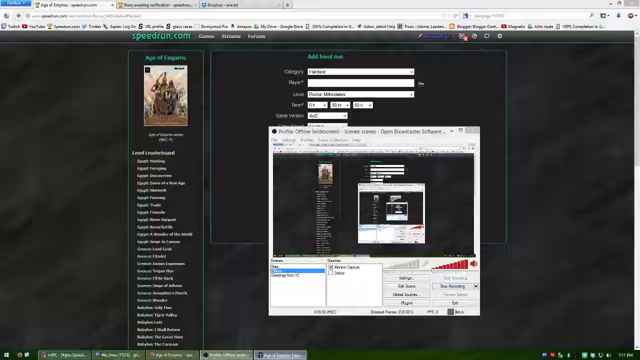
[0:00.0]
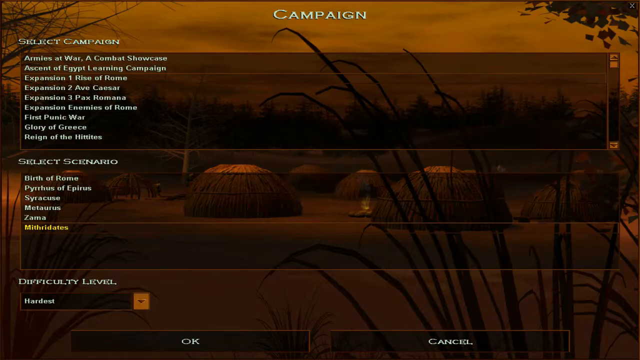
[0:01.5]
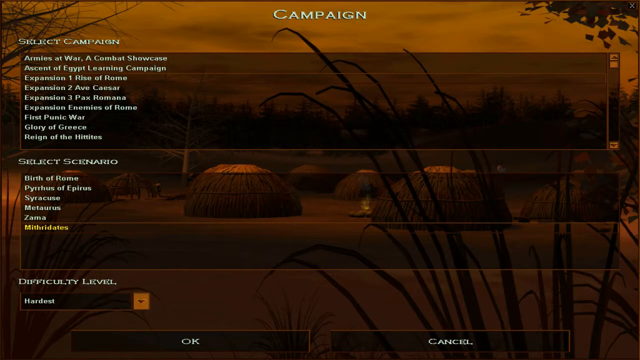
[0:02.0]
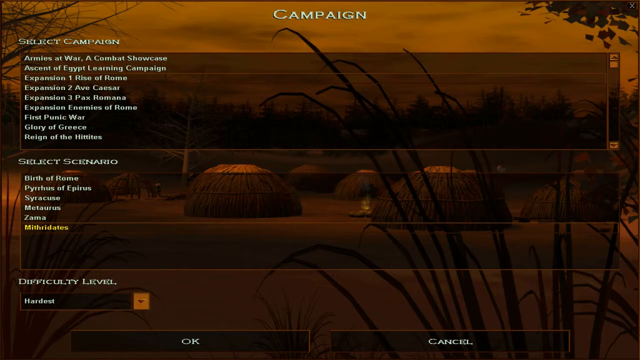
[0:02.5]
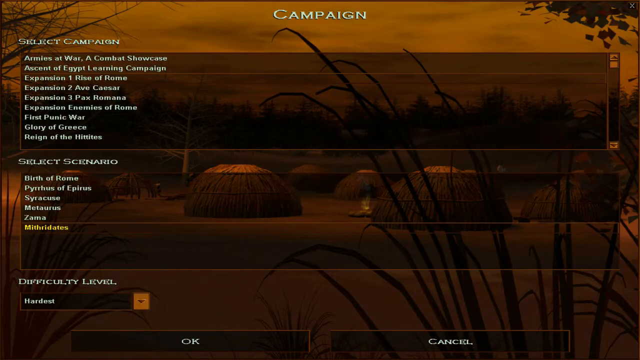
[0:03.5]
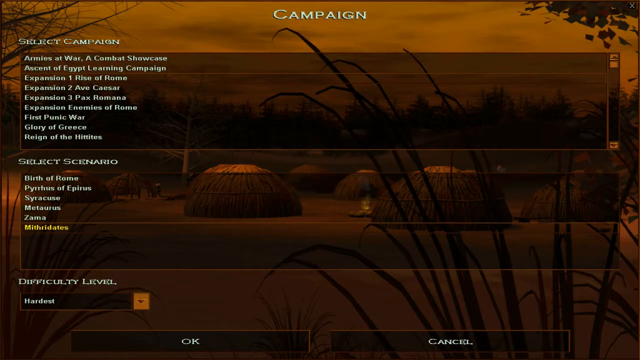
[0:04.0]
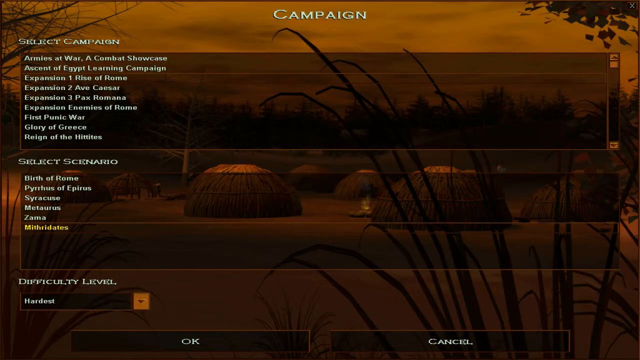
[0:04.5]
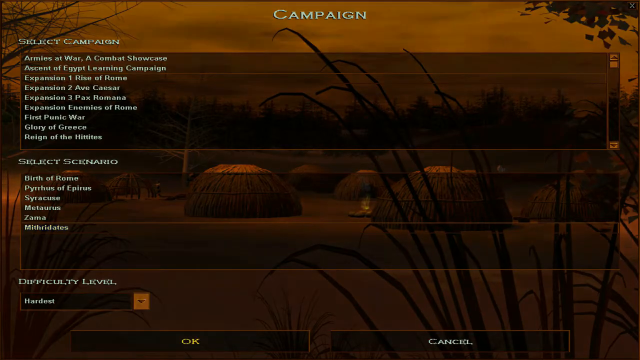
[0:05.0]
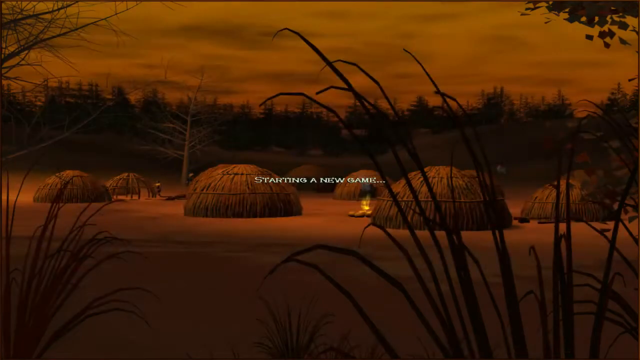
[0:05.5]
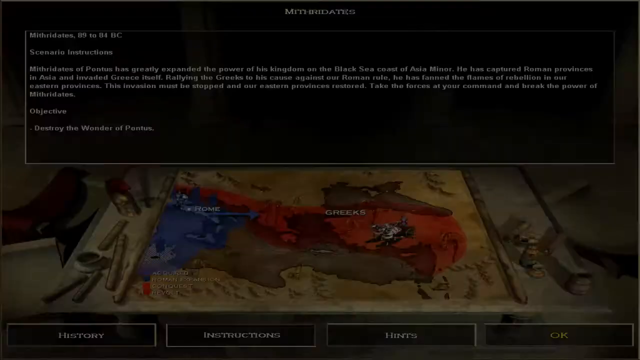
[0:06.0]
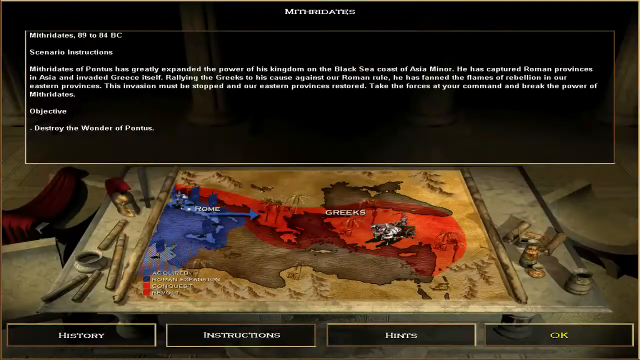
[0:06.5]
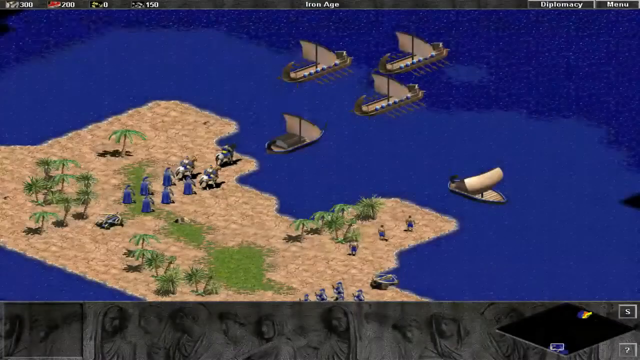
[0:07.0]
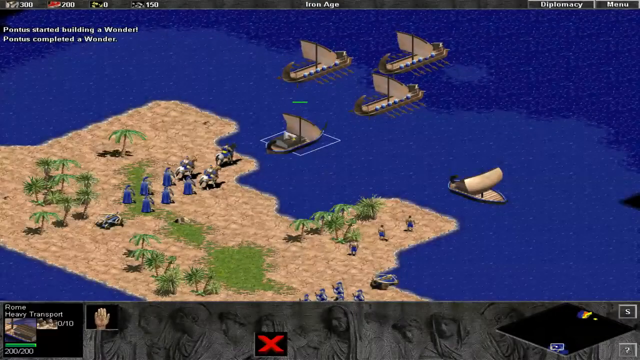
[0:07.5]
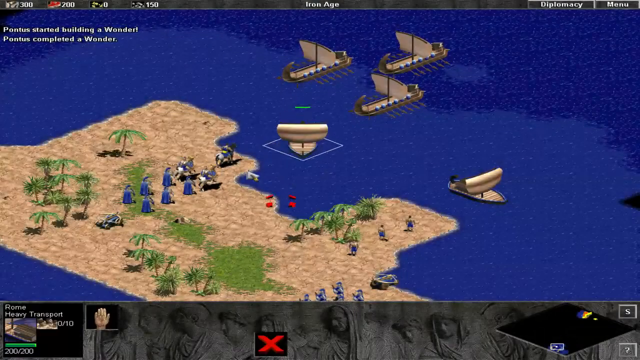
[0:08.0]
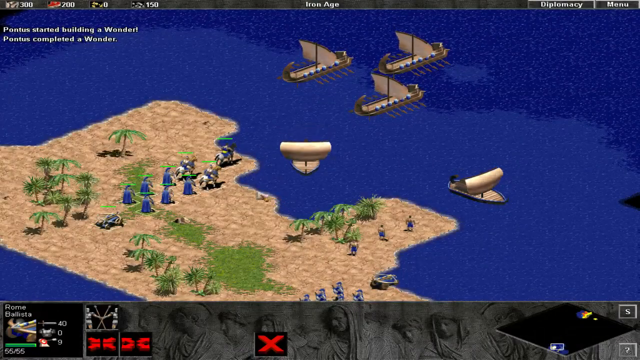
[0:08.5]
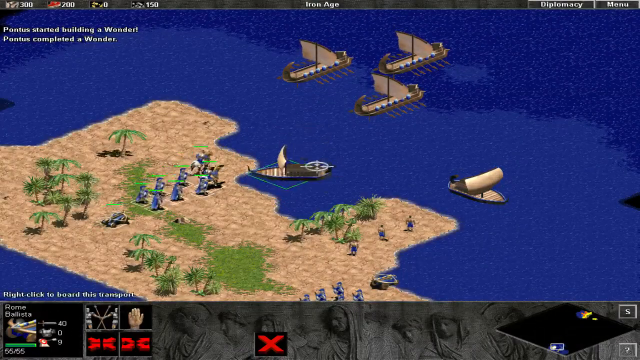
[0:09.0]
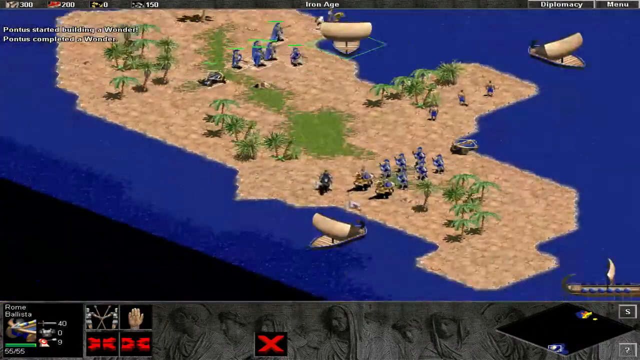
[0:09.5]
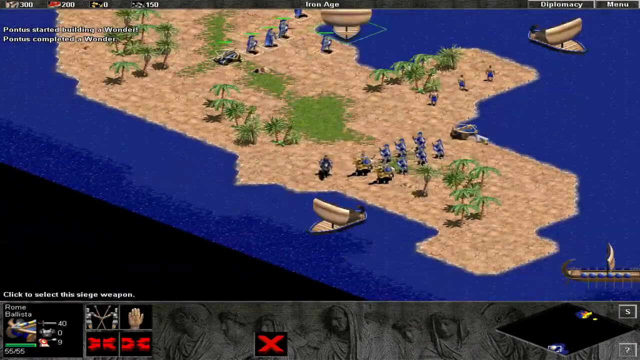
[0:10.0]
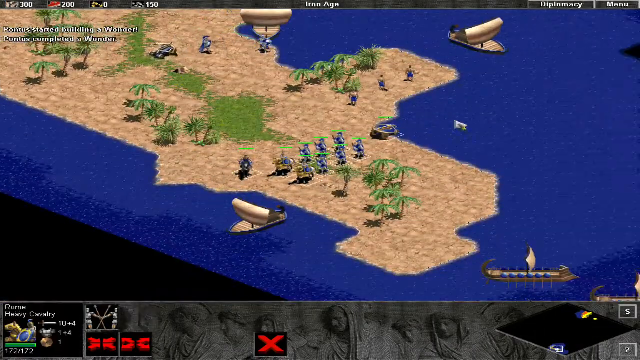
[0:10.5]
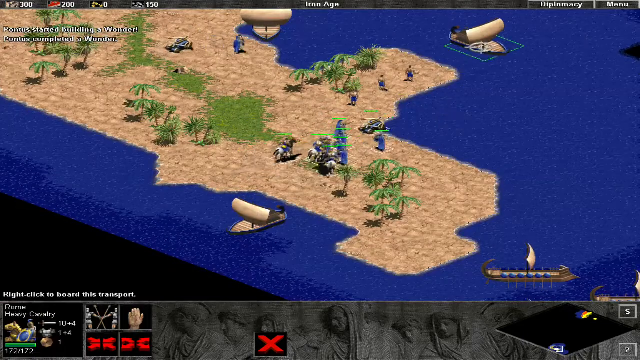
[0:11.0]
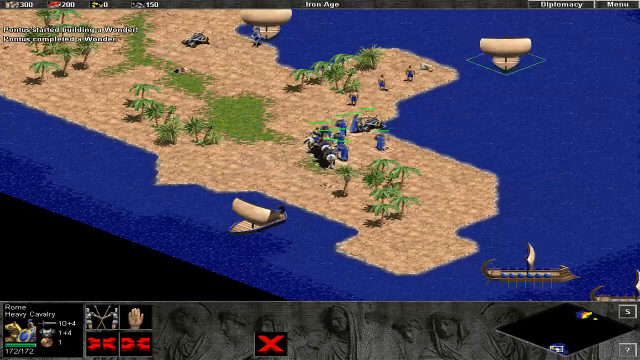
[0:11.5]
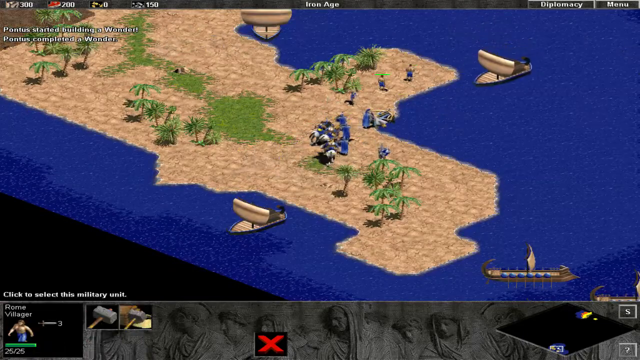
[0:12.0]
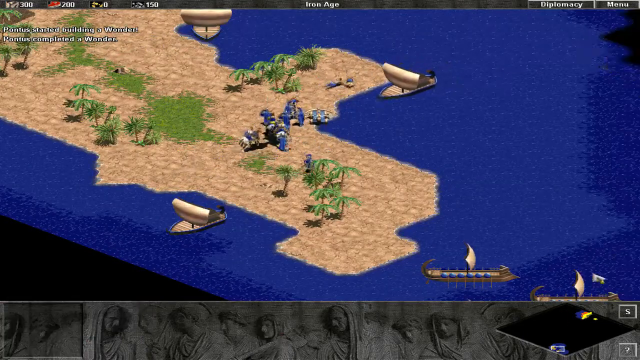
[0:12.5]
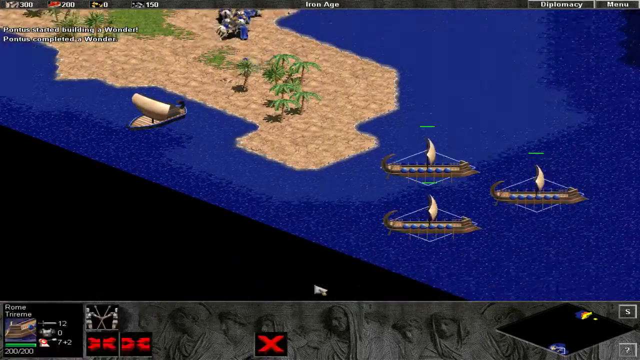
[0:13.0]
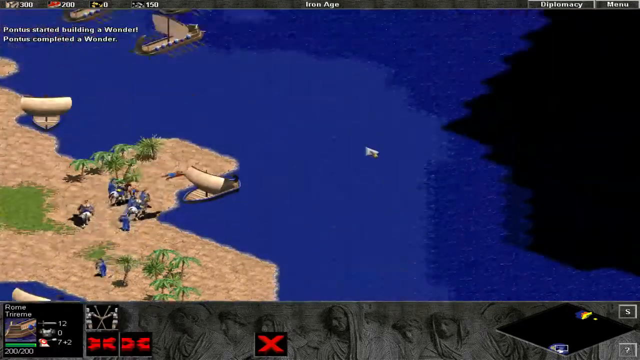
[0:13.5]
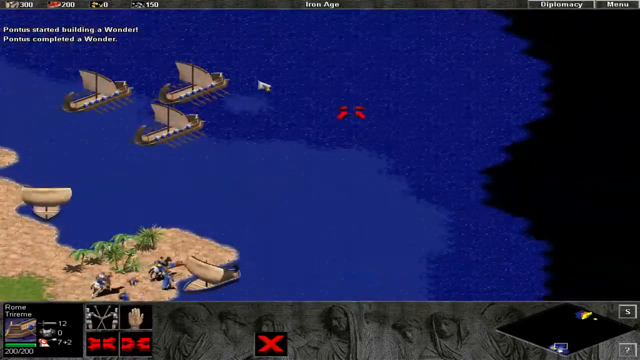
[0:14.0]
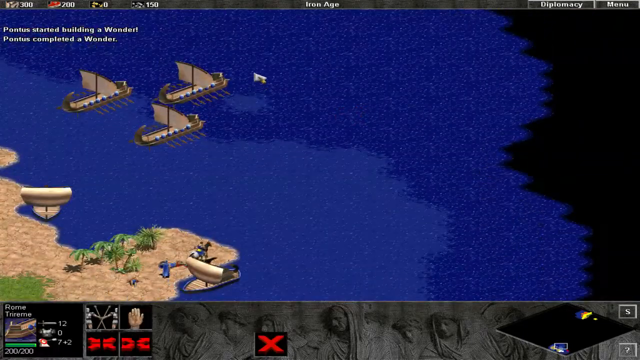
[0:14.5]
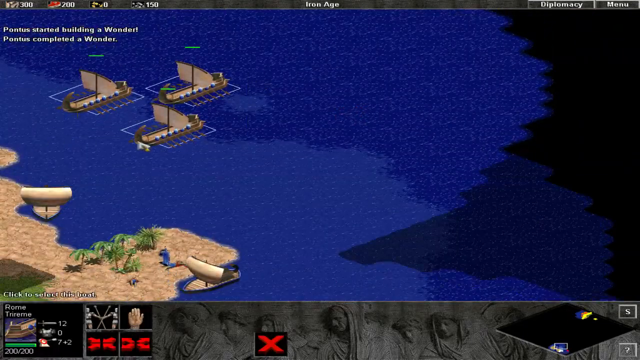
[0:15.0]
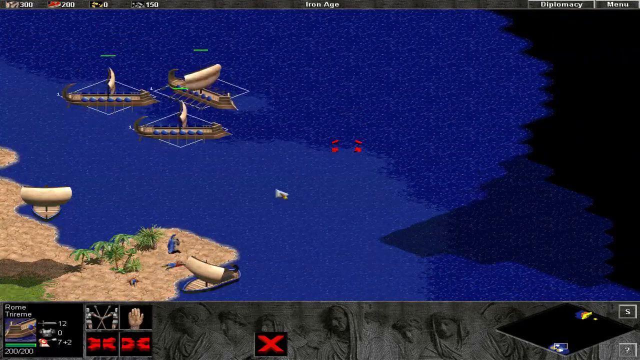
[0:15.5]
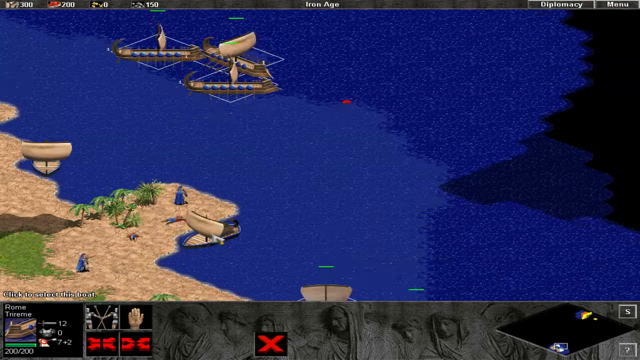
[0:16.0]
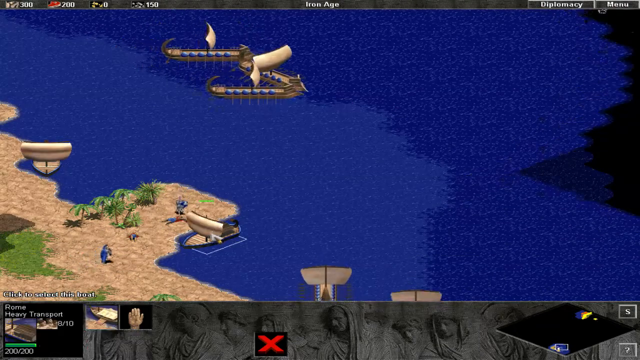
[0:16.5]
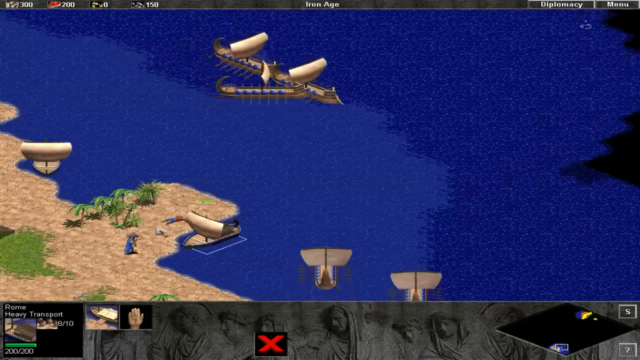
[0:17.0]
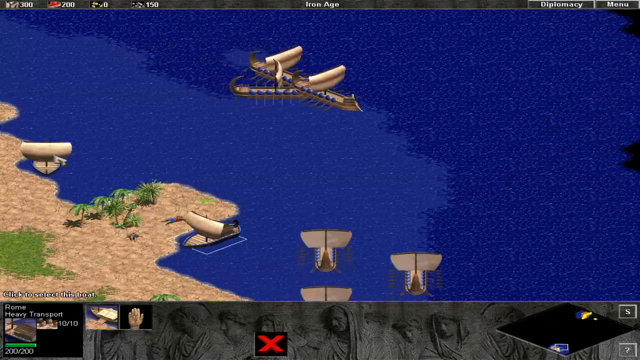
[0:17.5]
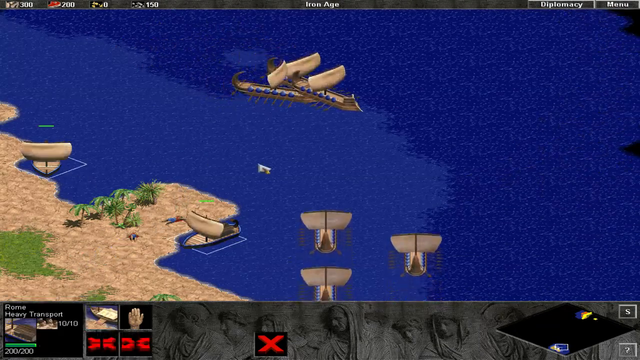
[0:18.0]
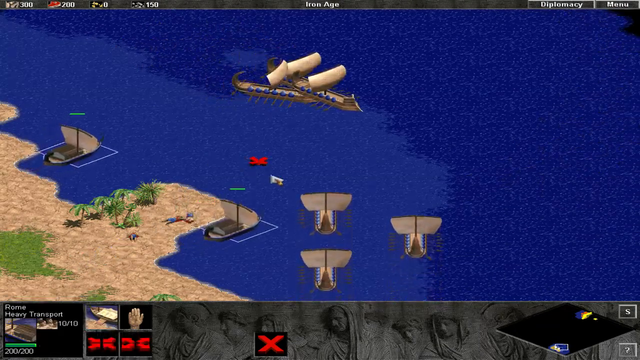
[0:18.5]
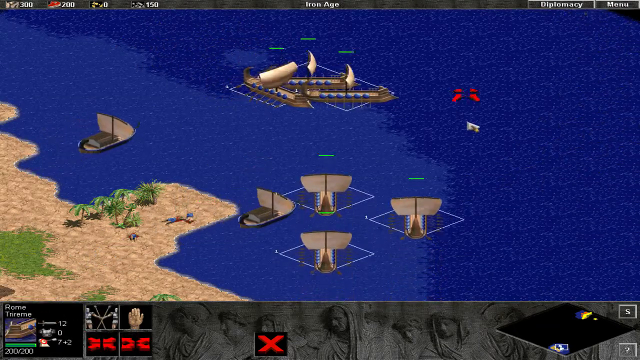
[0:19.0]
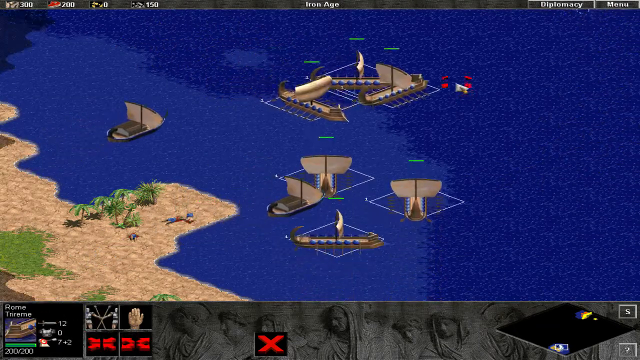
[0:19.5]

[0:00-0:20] A campaign is selected in what looks like a video game, apparently some sort of 4x4 strategy game, possibly Age of Empires. It is a 3D pixel map showing something like a sandy beach in front of the blue ocean, with what look like ancient gladiators. The gladiators get onto boats, and the boats move into the water. The boats look like ancient Egyptian-style boats: long and narrow, brown with a little blue on the sides, with a single sail in the middle and a bunch of oars sticking out of the sides.